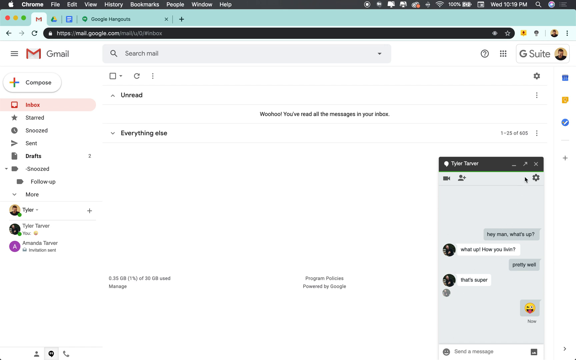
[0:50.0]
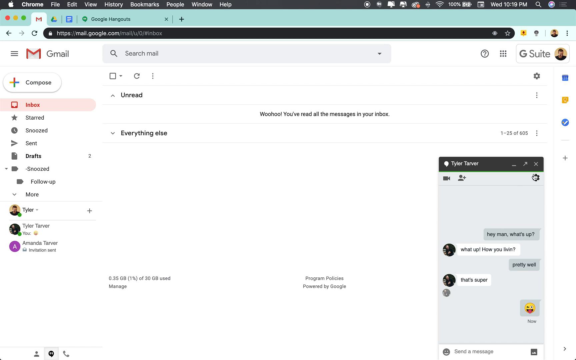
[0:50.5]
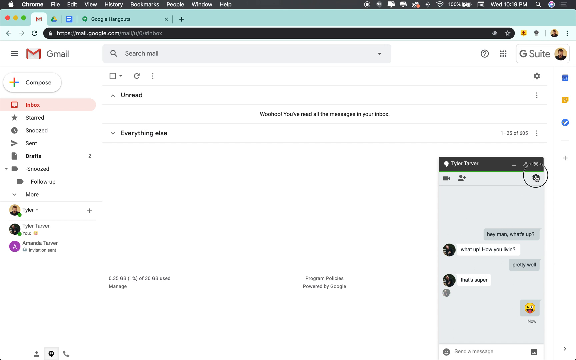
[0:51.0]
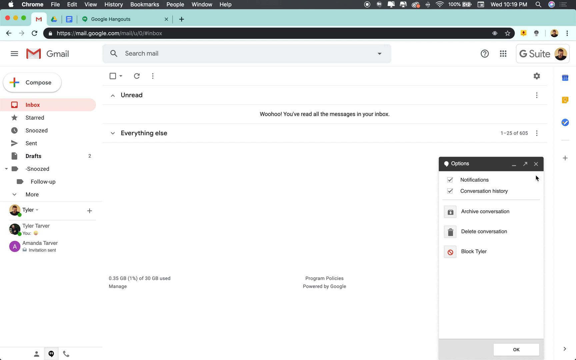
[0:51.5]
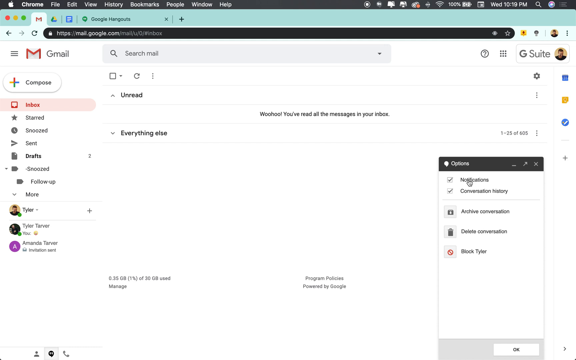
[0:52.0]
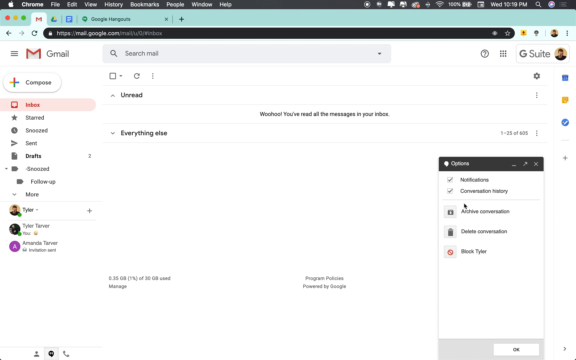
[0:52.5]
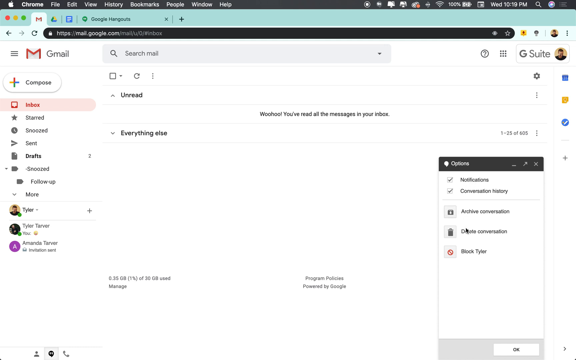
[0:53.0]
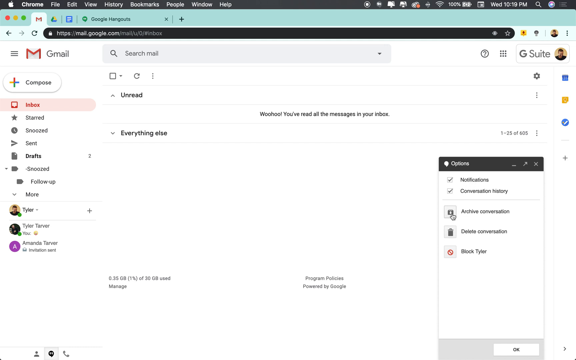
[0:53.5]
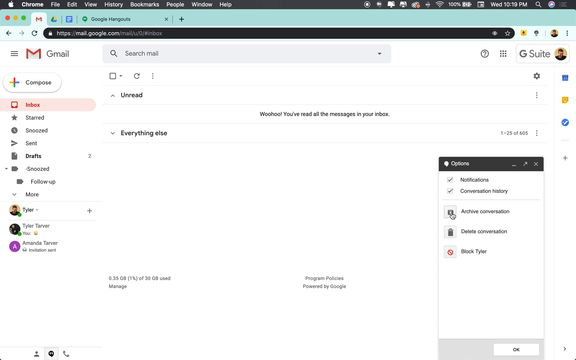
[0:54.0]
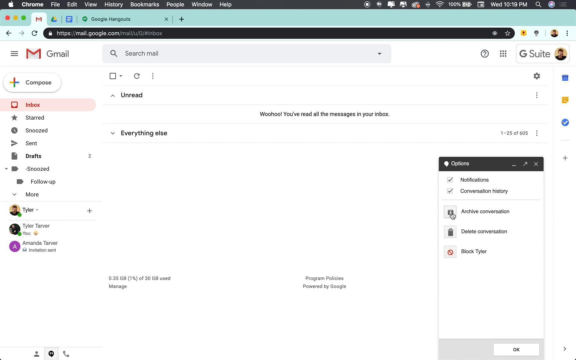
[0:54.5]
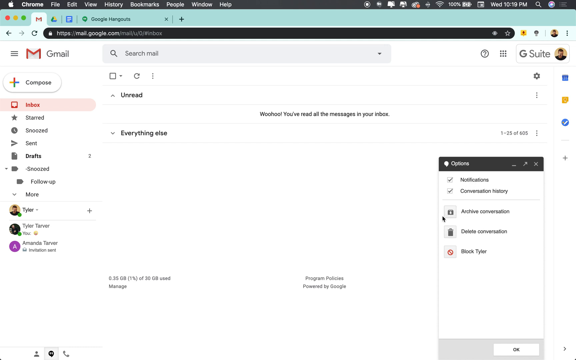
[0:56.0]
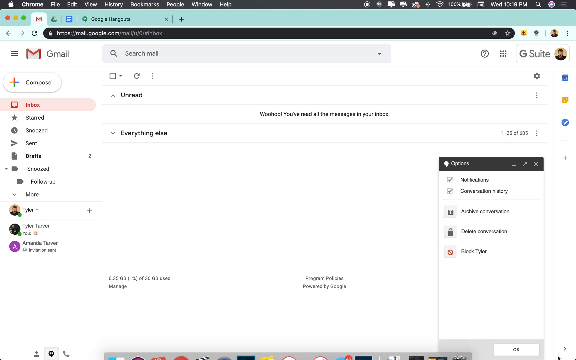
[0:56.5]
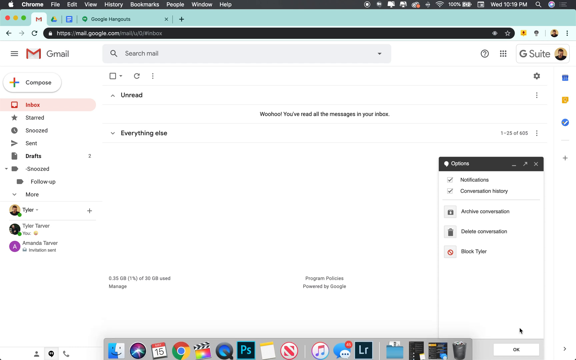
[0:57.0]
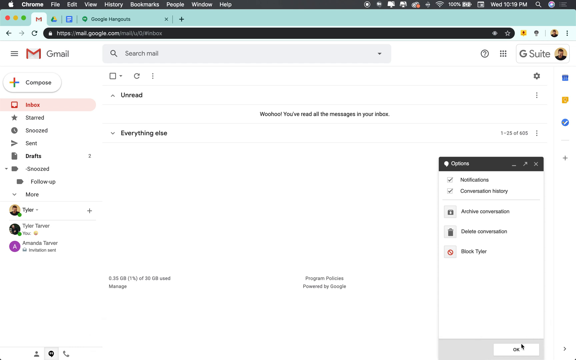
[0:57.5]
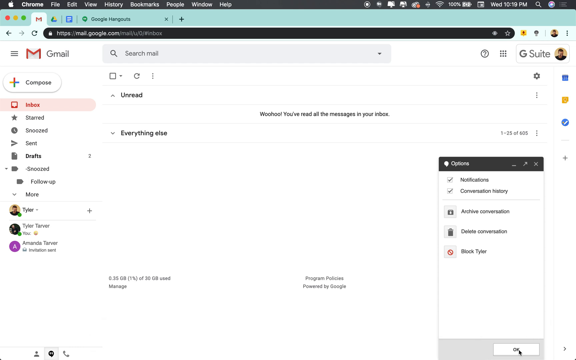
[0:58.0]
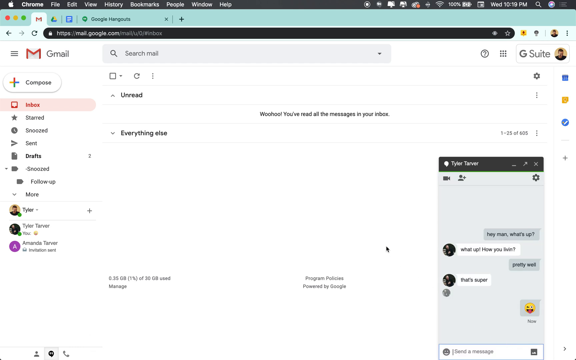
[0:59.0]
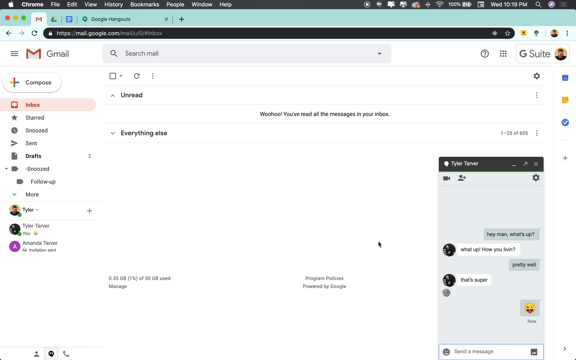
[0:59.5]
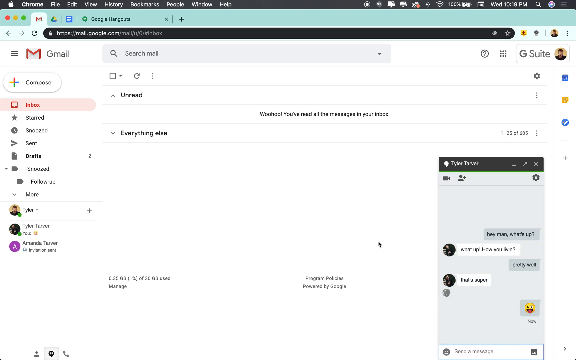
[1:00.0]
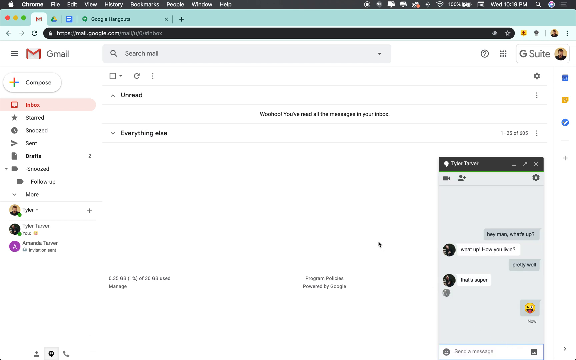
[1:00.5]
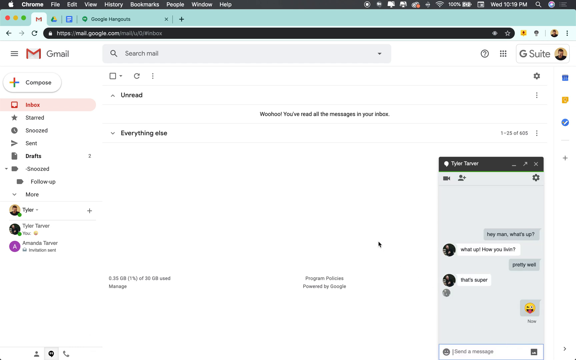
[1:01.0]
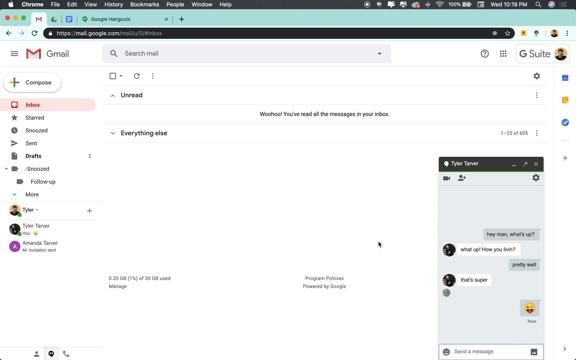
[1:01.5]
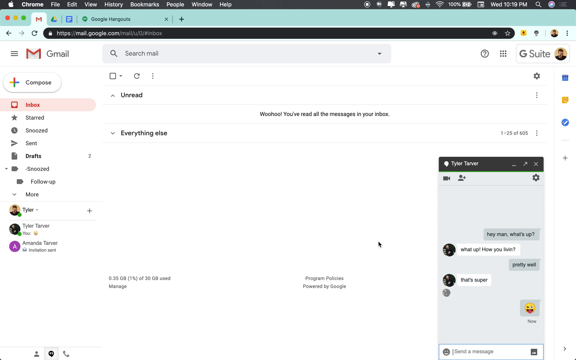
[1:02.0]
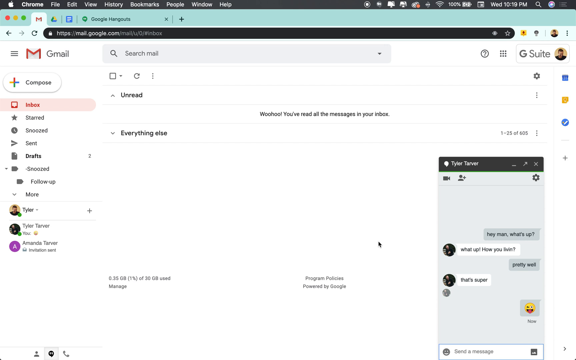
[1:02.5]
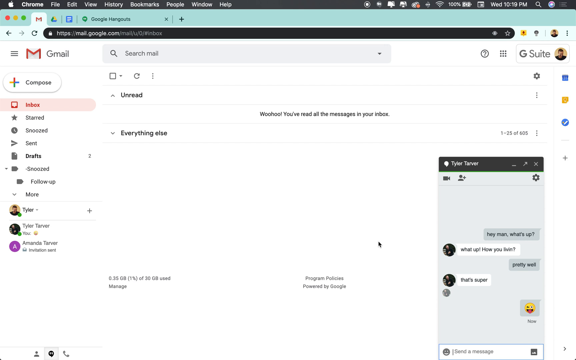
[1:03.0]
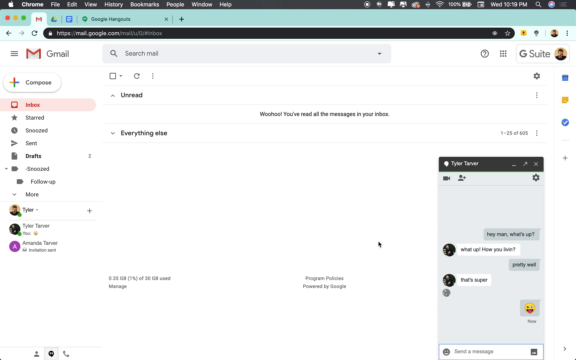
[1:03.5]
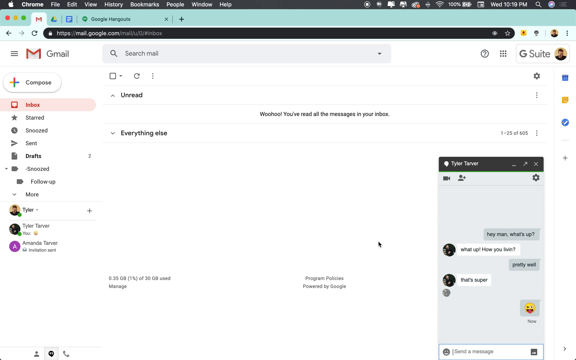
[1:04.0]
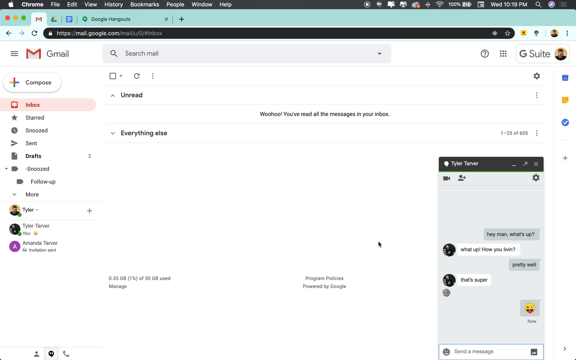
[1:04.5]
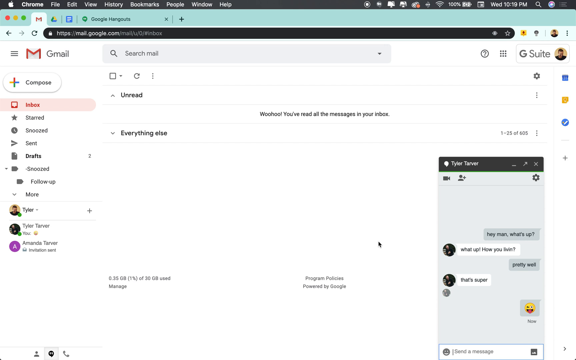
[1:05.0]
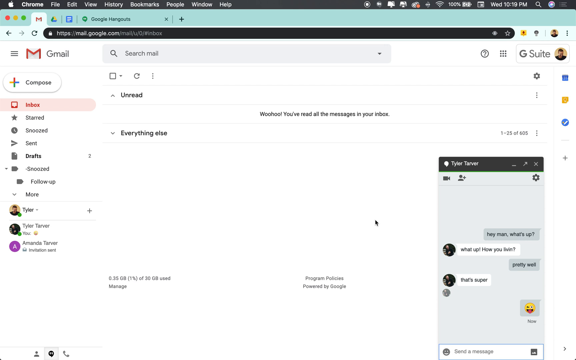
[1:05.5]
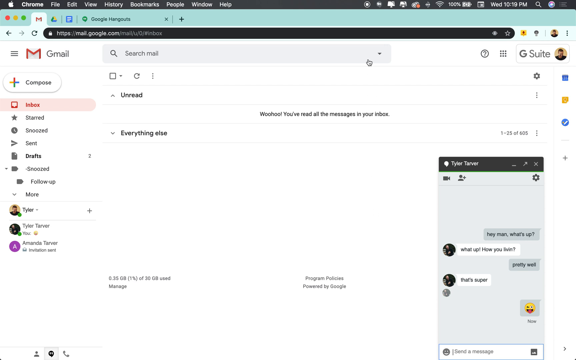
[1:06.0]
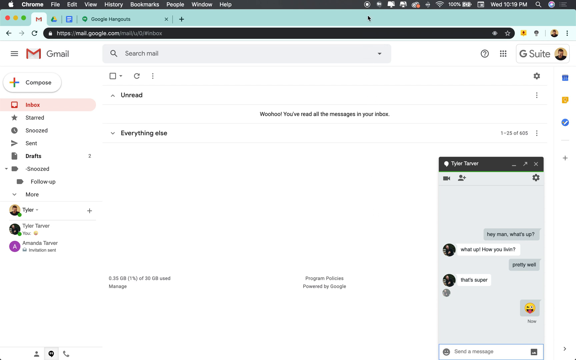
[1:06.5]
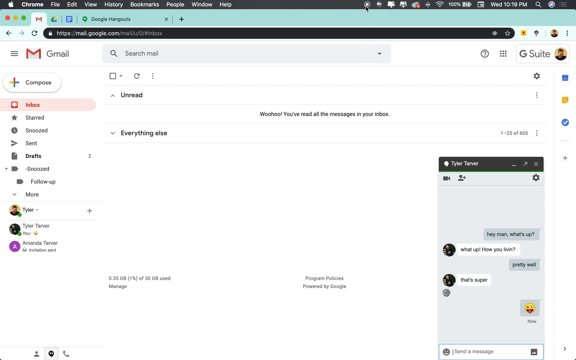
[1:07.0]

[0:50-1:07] In the conversation, a gear button near the top right, just below the X, brings up more options. First are two checkboxes: the top one reads "Notifications" and the one below reads "Conversation History." Below that is a button labeled "Archive Conversation," and right below it "Delete Conversation." Lastly there is an option to block Tyler, marked with a little red circle with a diagonal line over it. The user goes back to the conversation and does not move the mouse again until, at the very end, they scroll up toward the Stop button and stop recording.